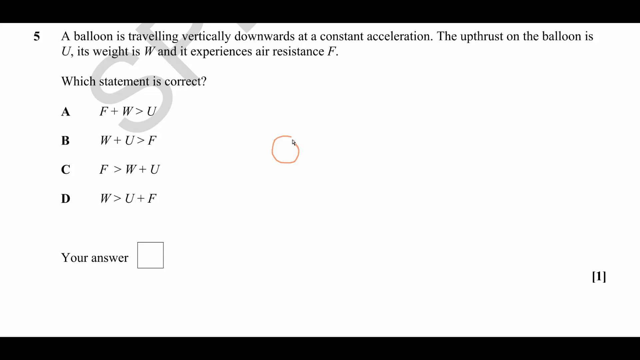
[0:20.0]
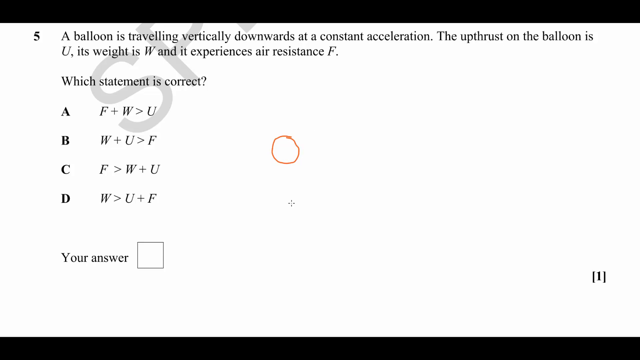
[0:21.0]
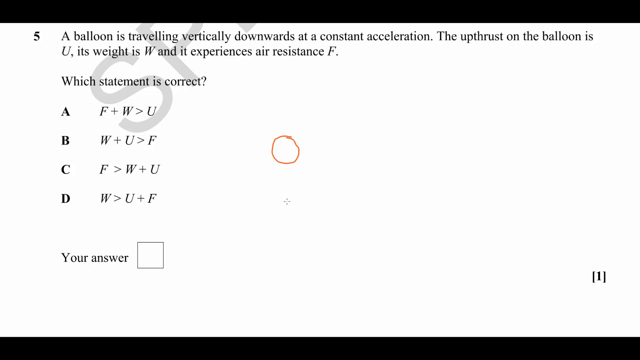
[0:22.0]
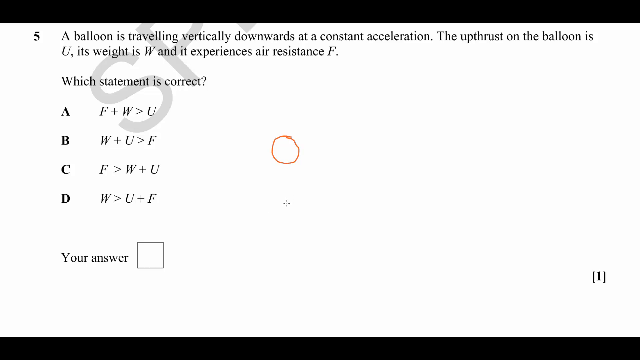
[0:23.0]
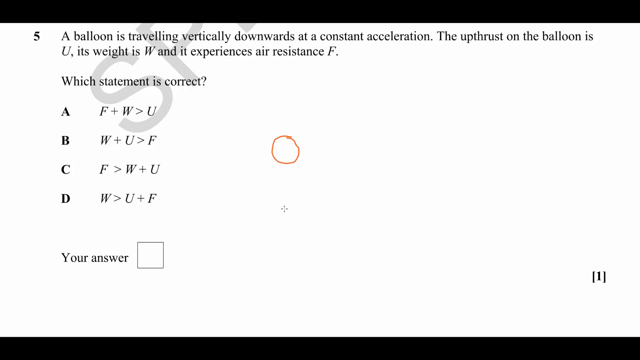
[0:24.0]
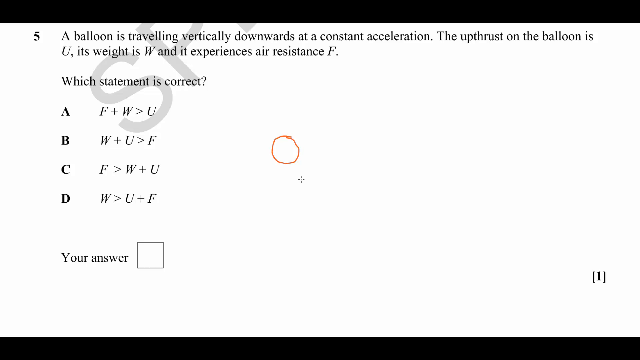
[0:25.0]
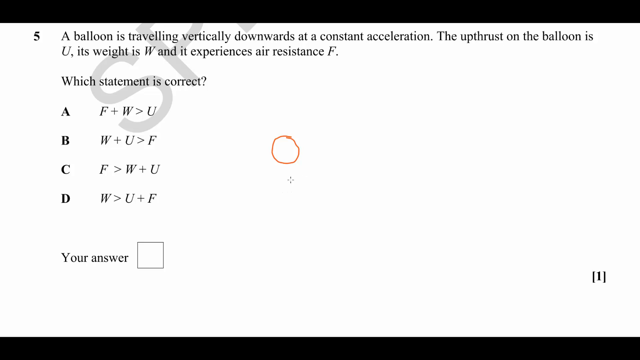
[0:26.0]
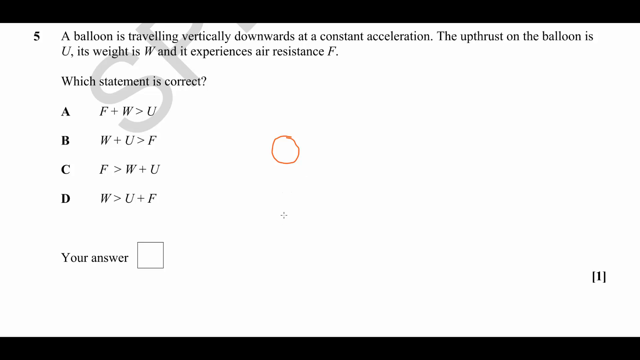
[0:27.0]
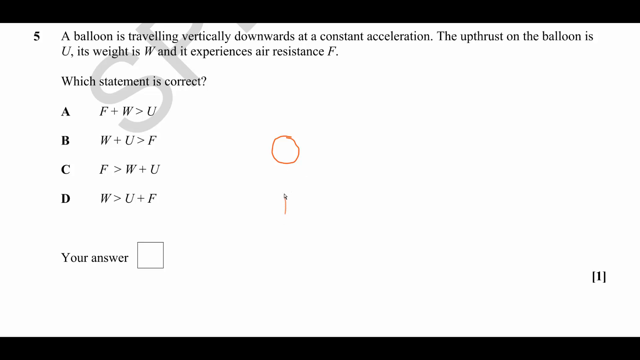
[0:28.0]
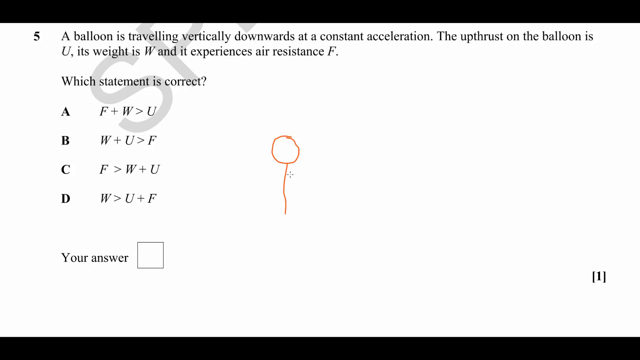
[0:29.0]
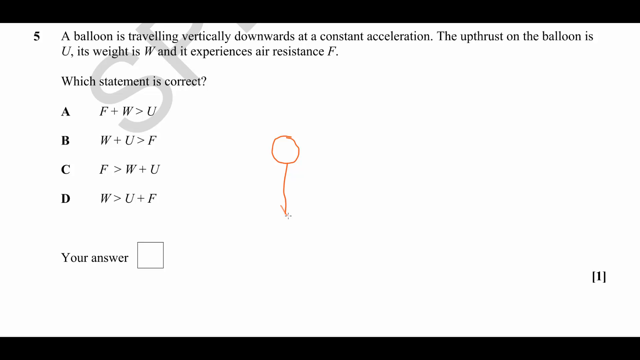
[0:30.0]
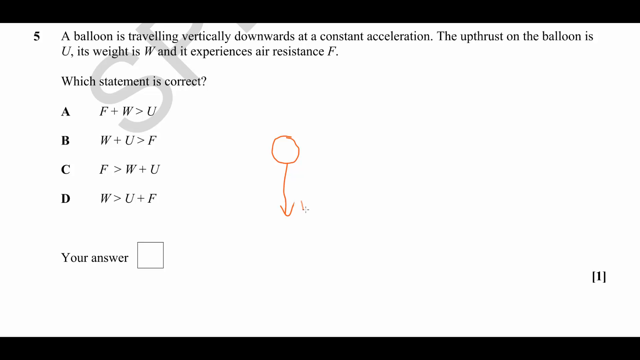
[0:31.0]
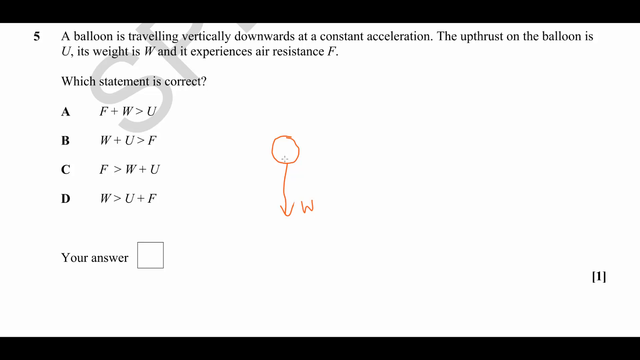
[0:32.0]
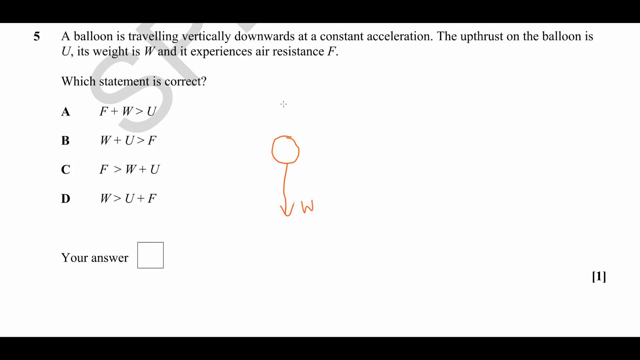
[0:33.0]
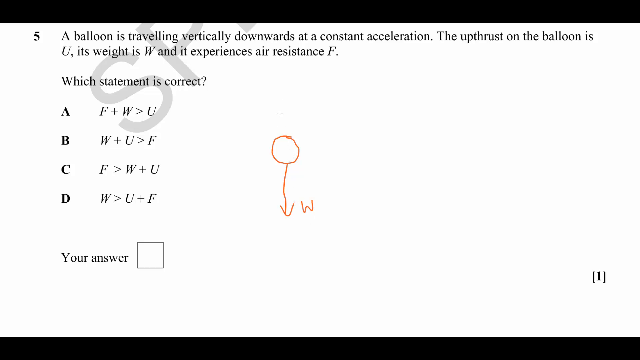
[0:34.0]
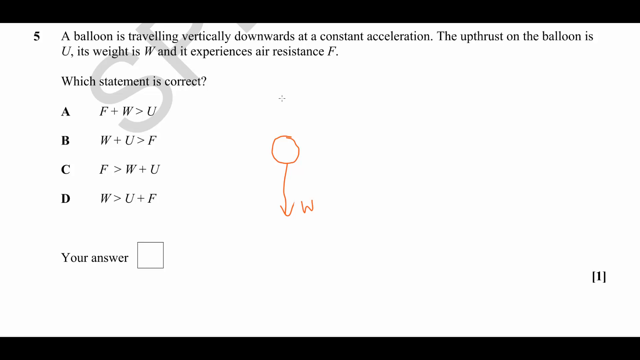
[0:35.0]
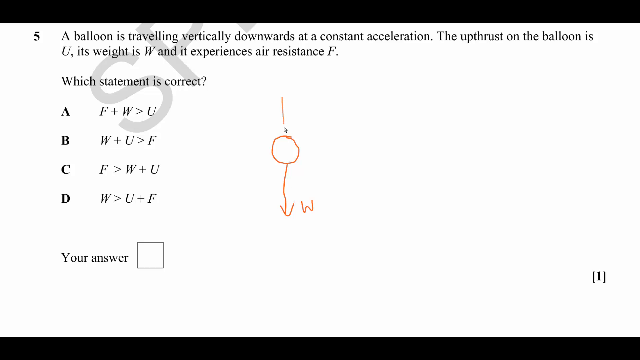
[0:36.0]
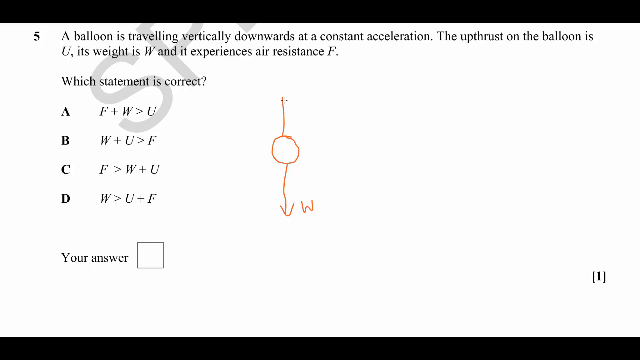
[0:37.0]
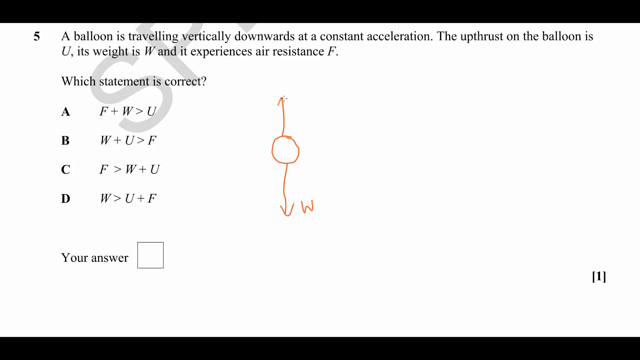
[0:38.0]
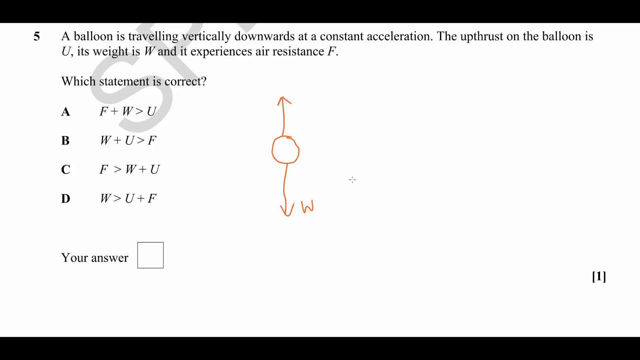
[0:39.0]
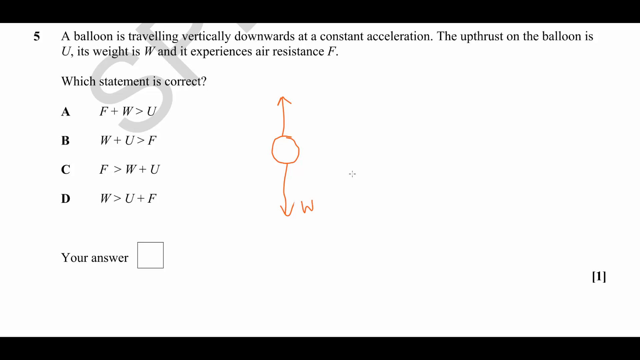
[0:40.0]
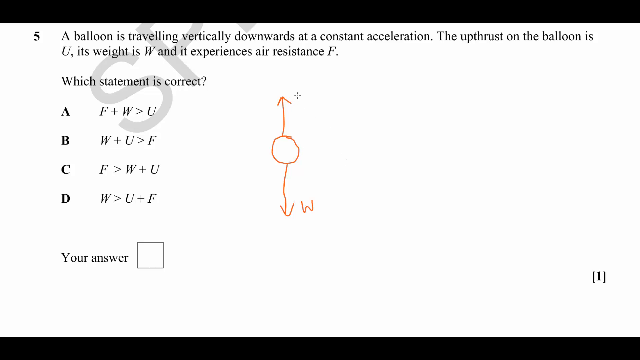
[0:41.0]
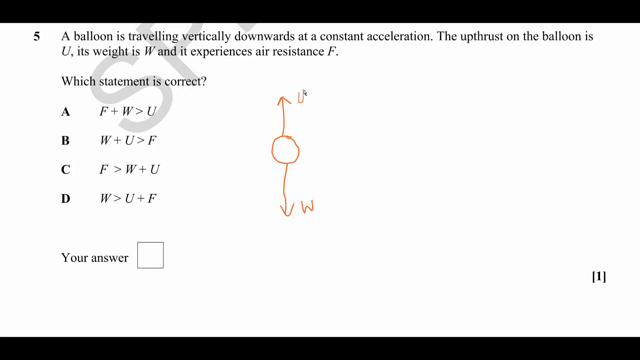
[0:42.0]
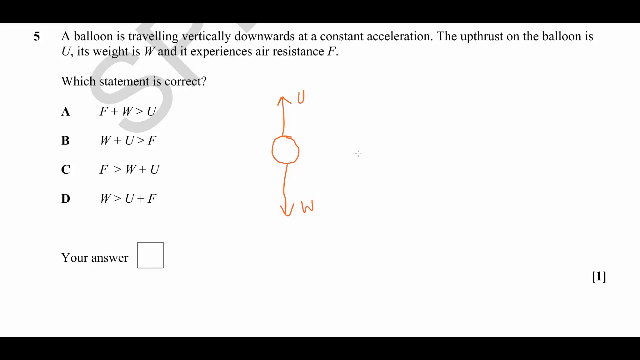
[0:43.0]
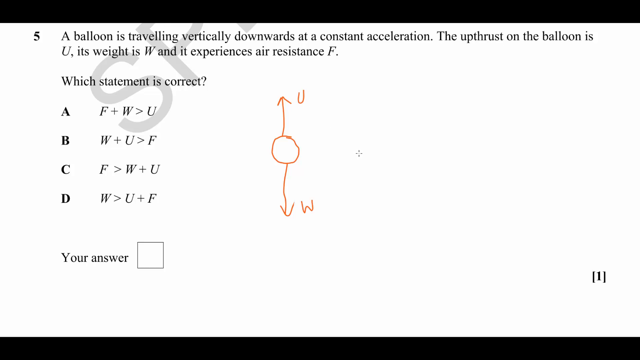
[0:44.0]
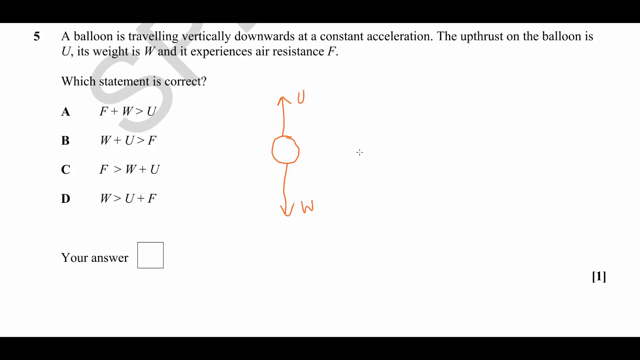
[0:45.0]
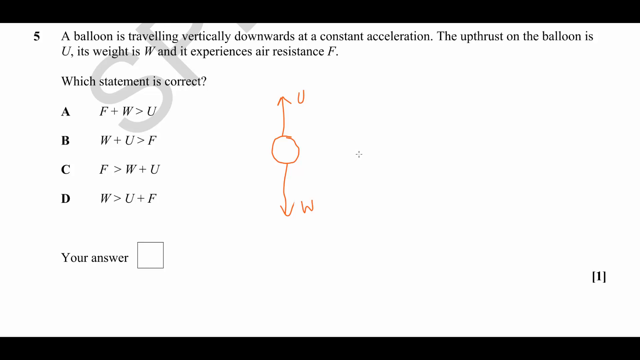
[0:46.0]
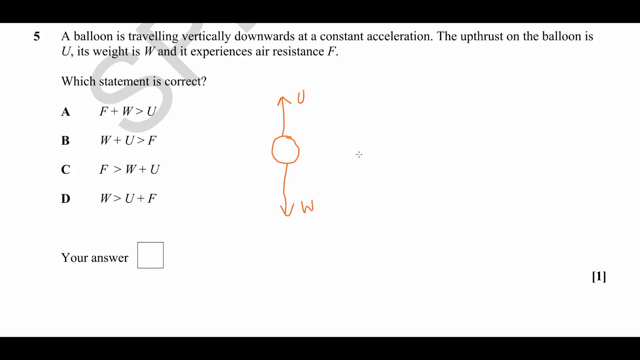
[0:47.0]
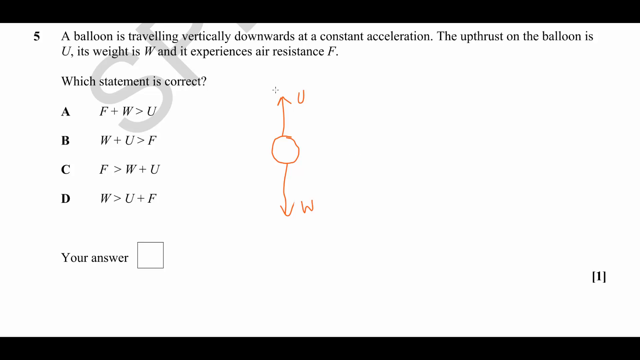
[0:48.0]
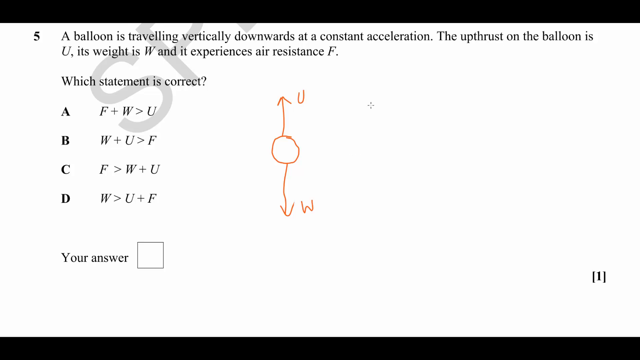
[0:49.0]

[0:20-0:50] A question on a computer concerns a balloon traveling vertically downwards at a constant acceleration. Behind the question, the letters "SP" are written in large text on an angle, in a light font so the question stays fully visible. Three letters are provided to explain constants, and the question asks which statement is correct, with four potential answers. Each answer gives a relation between the provided variables, stating whether one is greater or less than the other two combined. There is also a space to fill in the answer. To the right, a rough circle has been drawn in orange. The cursor then draws a line going down from the circle with an arrow and labels it W, then draws a line going up from the circle with an arrow pointing up and labels it U.